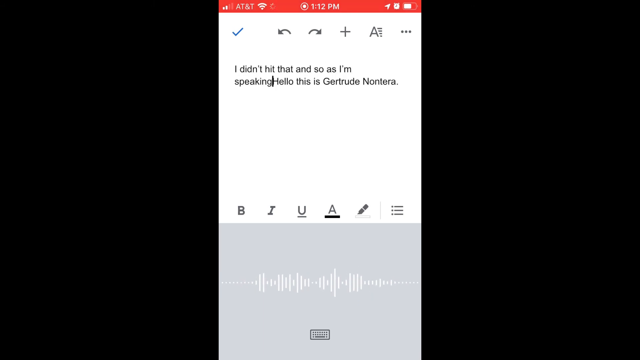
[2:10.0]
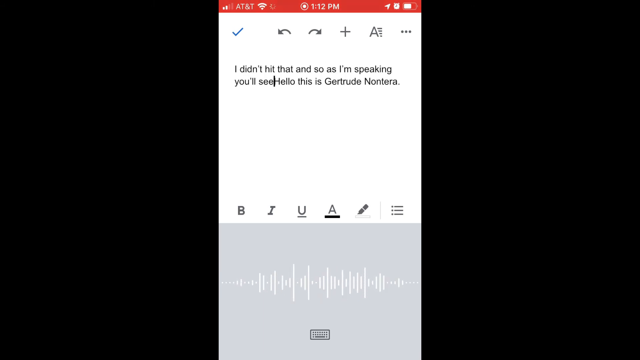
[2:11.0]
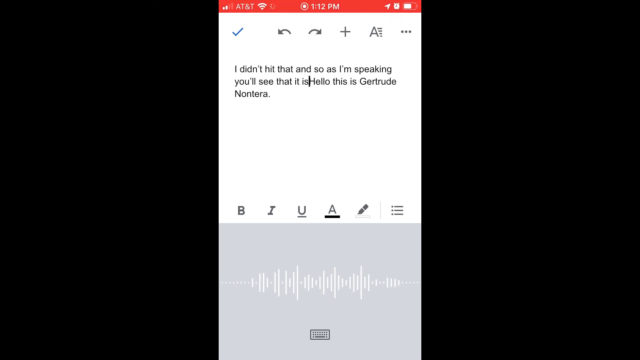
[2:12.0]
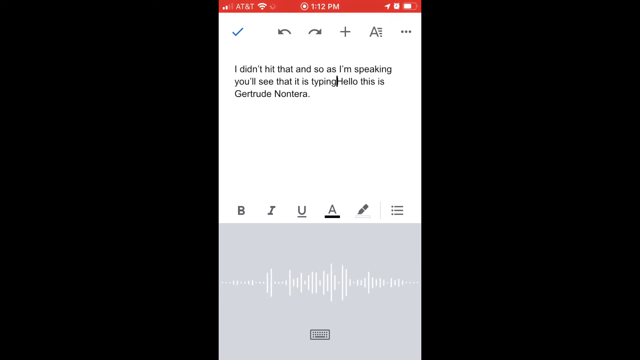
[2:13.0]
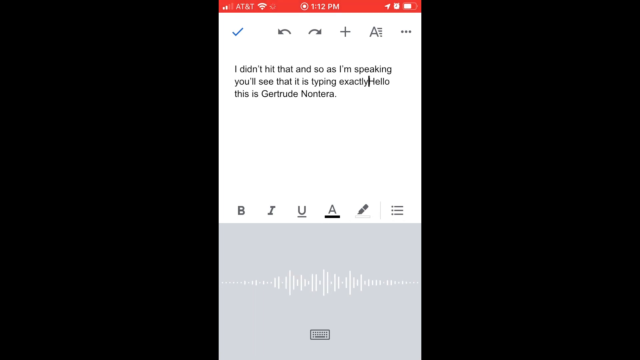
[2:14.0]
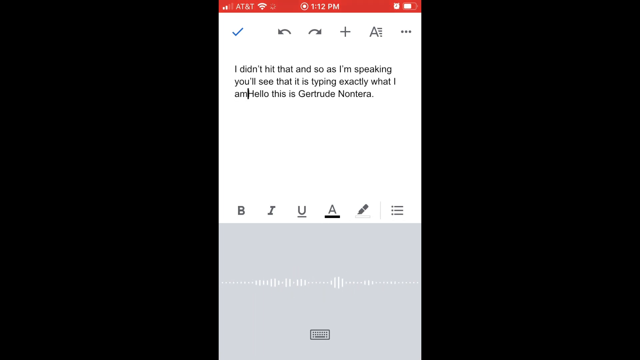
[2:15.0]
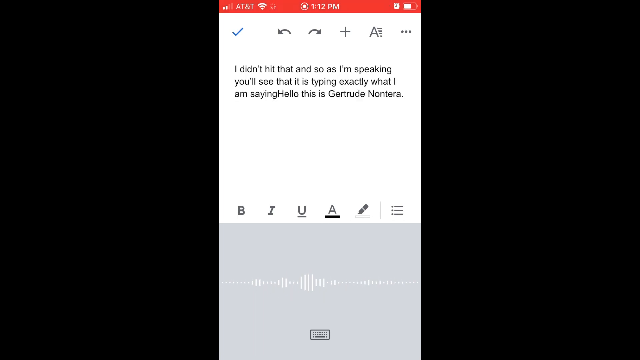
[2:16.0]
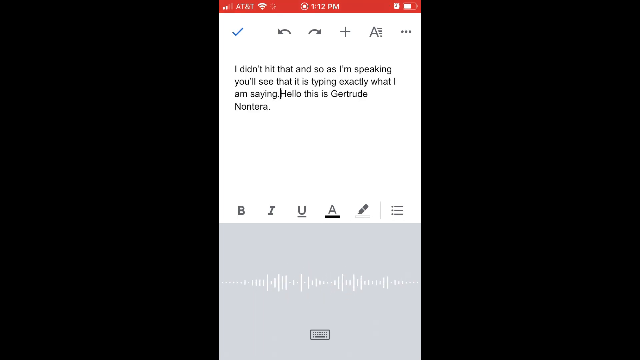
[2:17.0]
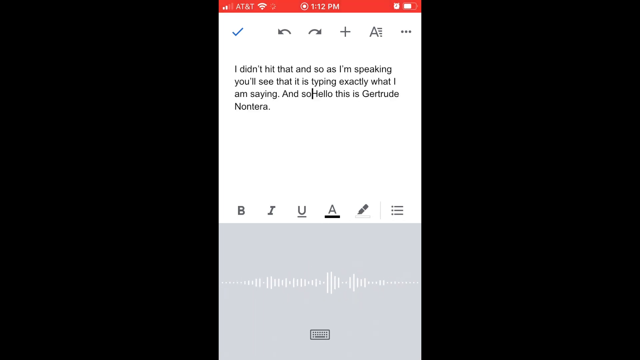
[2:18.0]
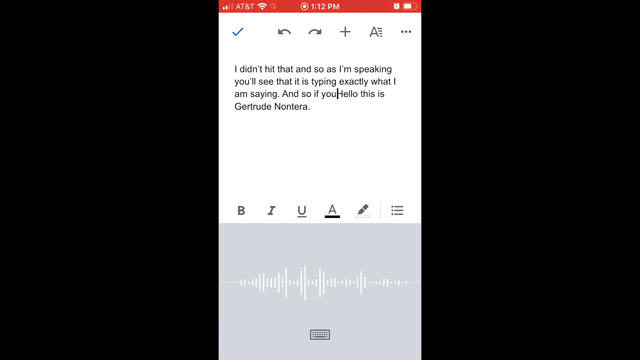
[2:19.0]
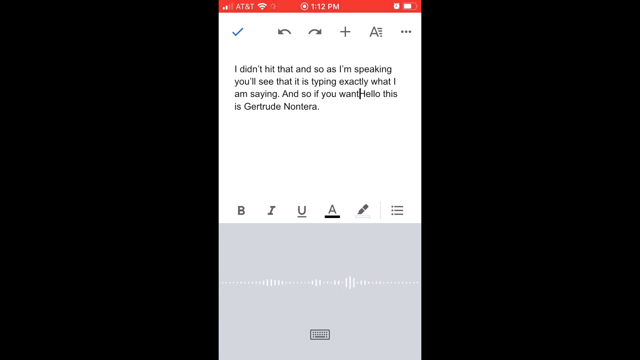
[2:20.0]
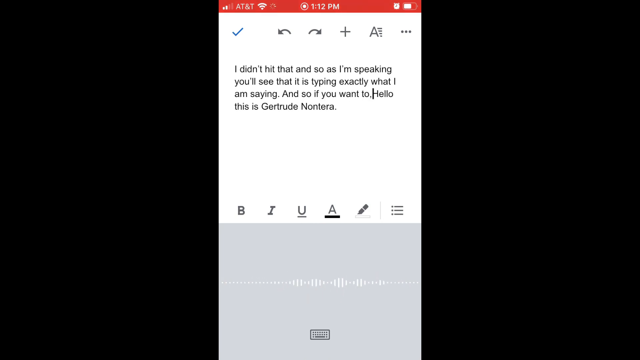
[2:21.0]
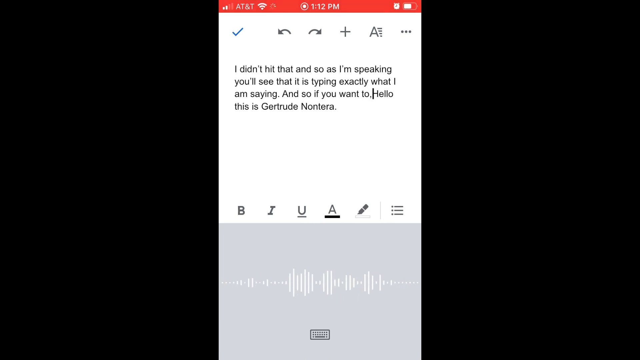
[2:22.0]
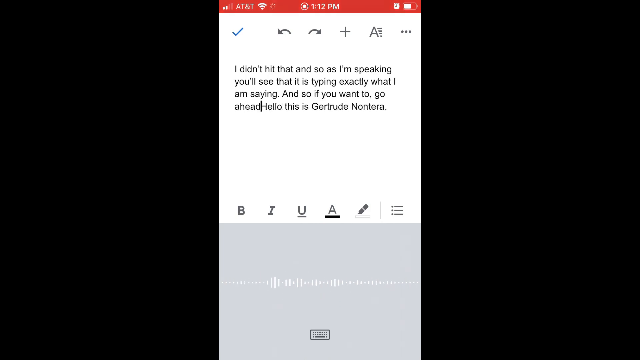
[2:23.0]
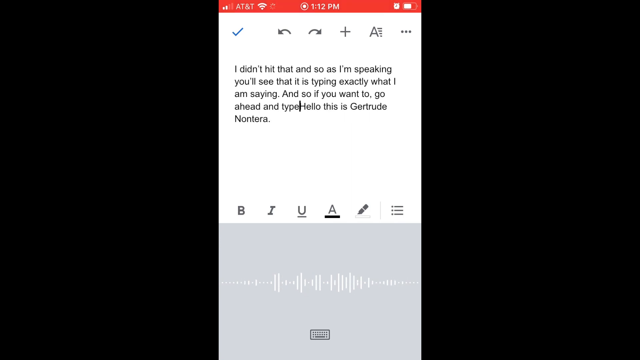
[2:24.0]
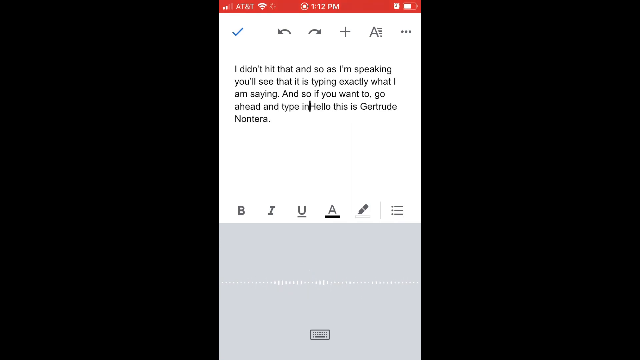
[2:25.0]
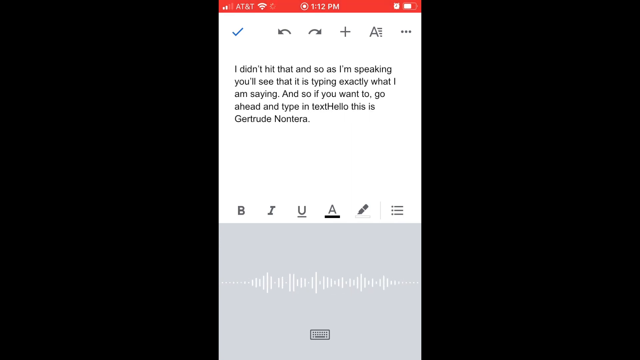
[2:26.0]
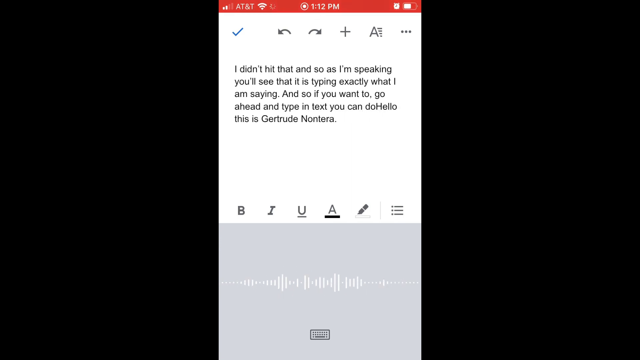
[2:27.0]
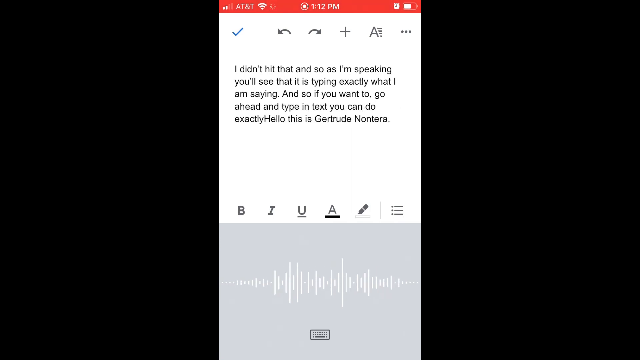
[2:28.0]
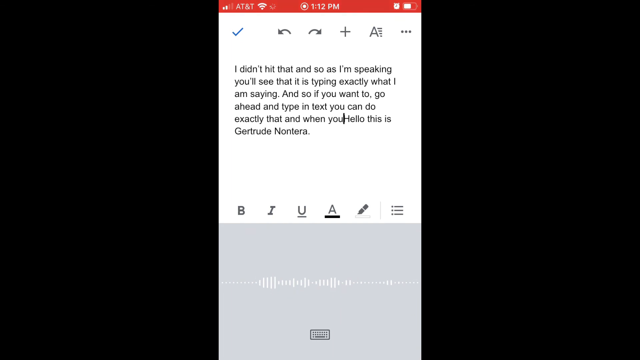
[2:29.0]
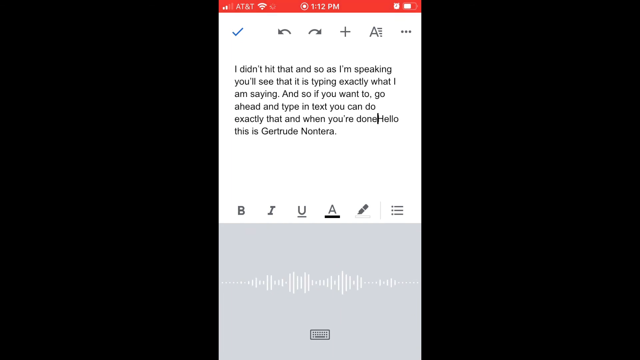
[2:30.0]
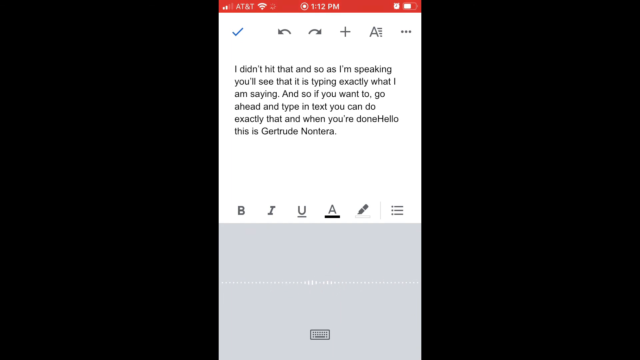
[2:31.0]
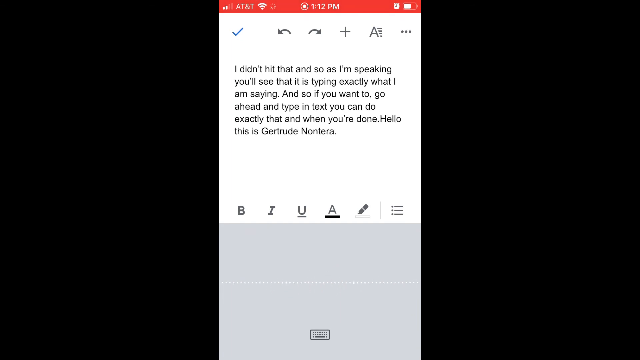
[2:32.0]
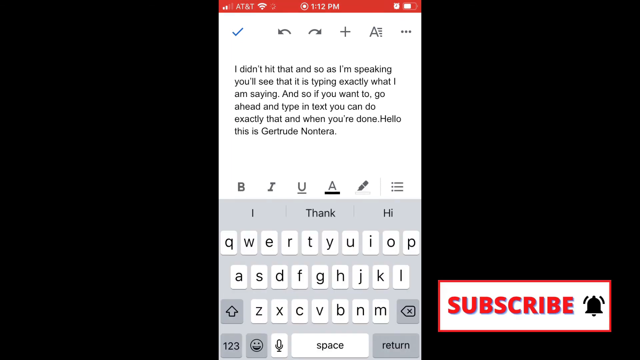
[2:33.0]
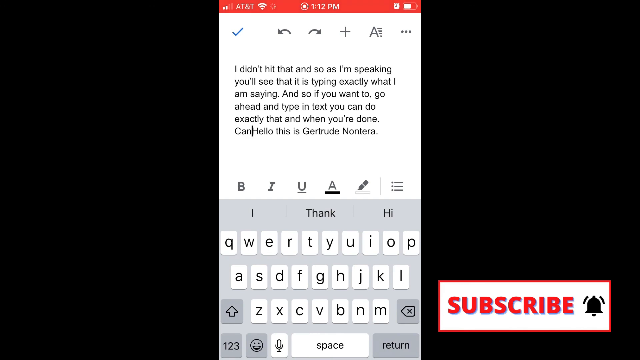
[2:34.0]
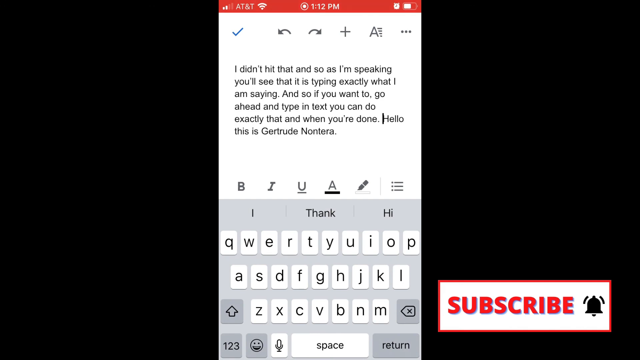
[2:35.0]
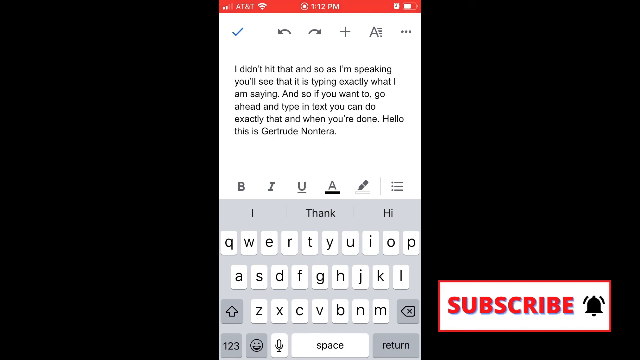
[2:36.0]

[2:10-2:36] The person continues using speech-to-text in the app, and more text appears in the document, reading "and so if you want to go ahead and type in text, you can do exactly that. And when you're done", after which no more text appears. The video stops almost abruptly. A subscribe button appears at the bottom right, with a bell to its right, red "subscribe" text, and a white, sort of rectangular background with a red border.